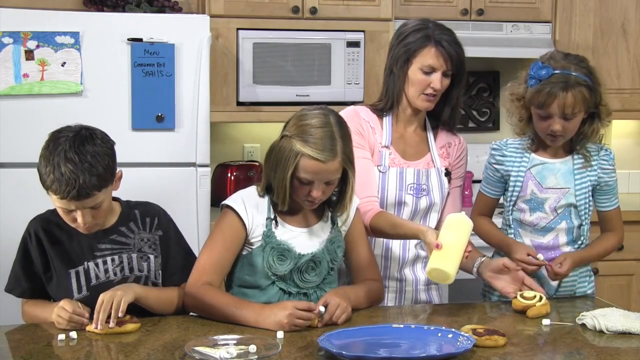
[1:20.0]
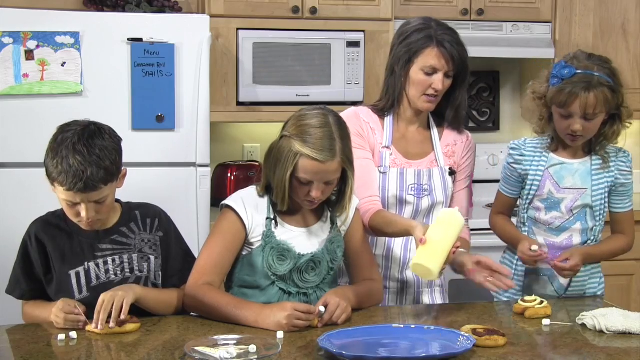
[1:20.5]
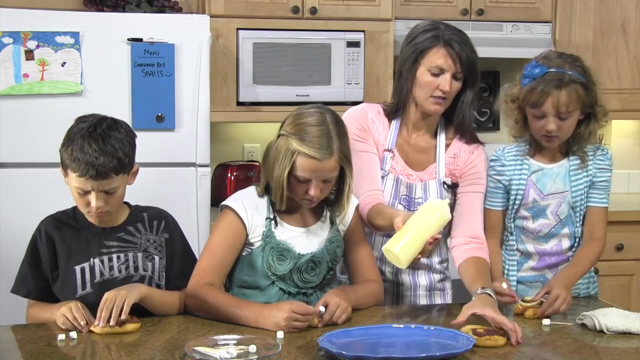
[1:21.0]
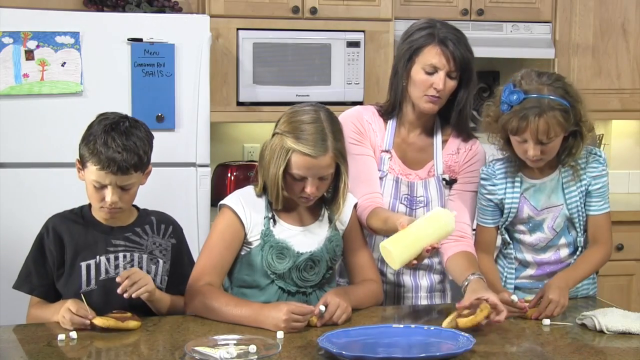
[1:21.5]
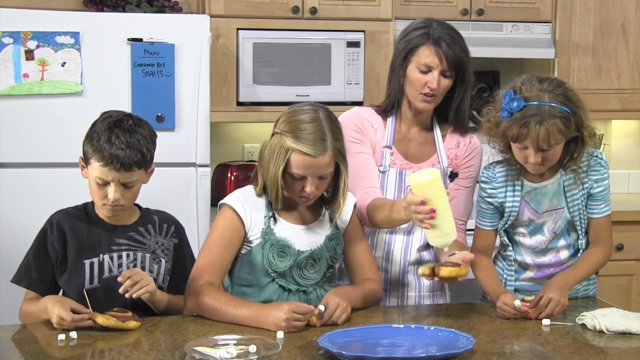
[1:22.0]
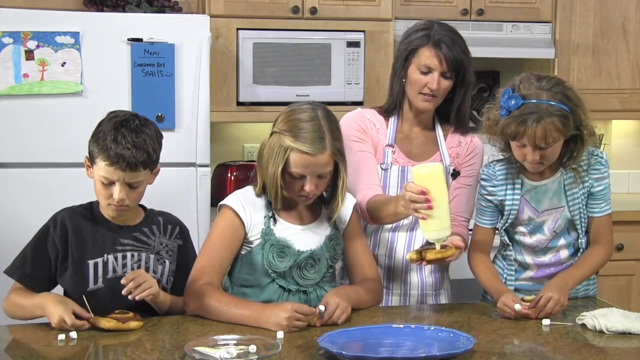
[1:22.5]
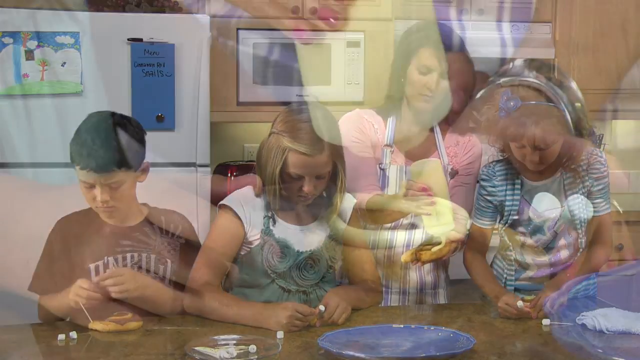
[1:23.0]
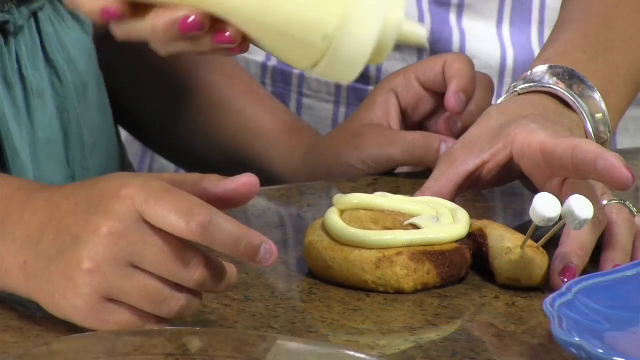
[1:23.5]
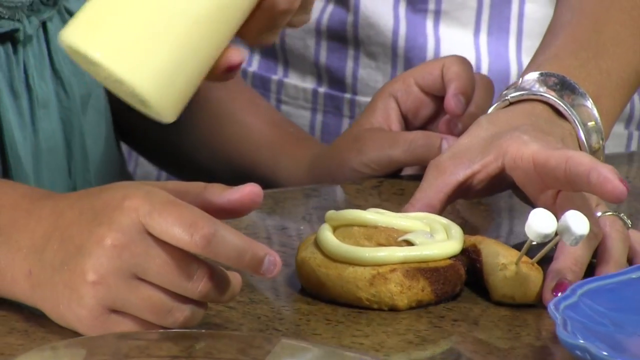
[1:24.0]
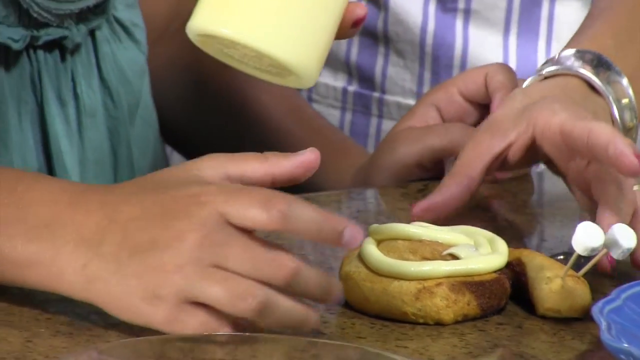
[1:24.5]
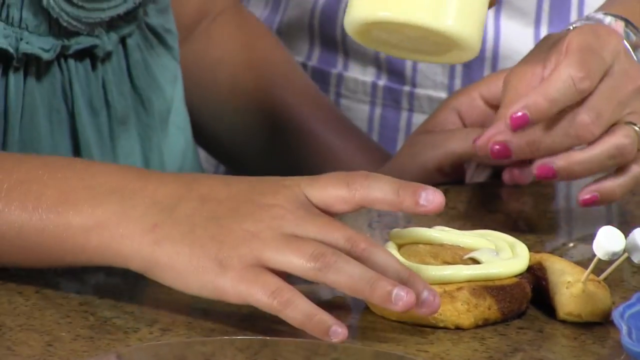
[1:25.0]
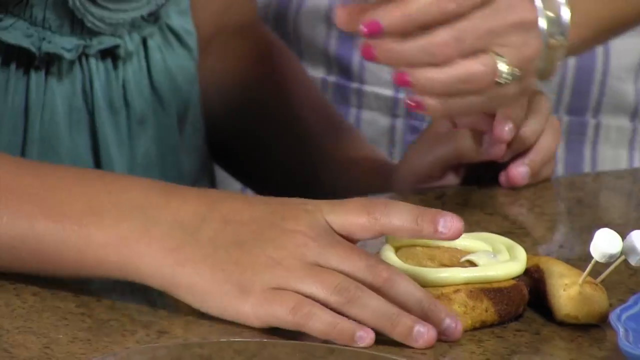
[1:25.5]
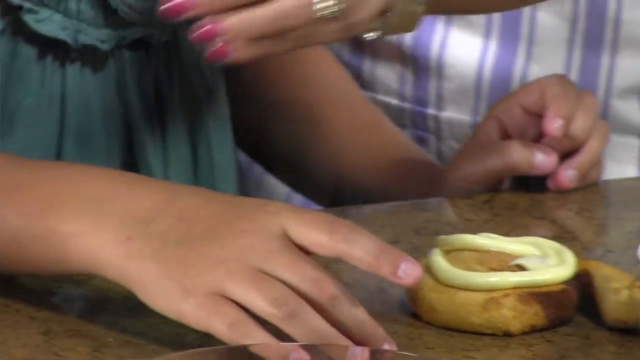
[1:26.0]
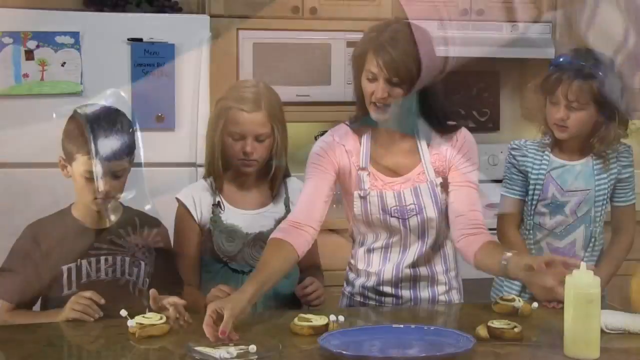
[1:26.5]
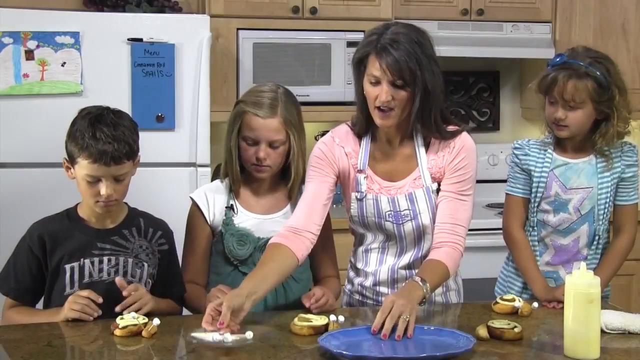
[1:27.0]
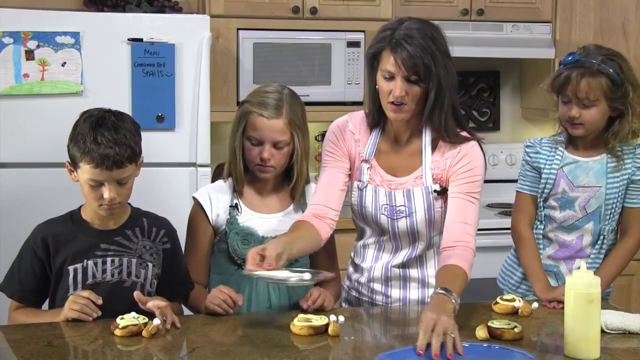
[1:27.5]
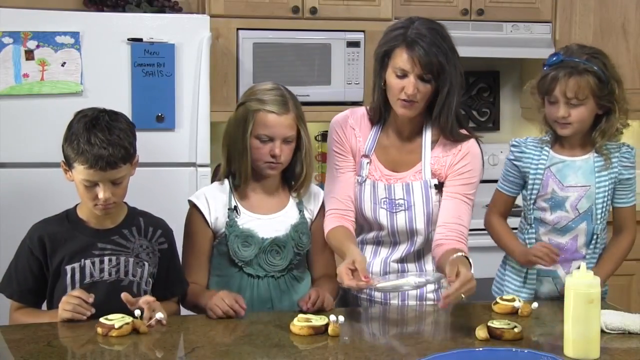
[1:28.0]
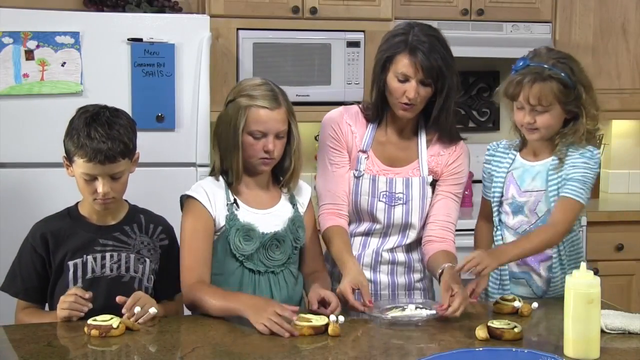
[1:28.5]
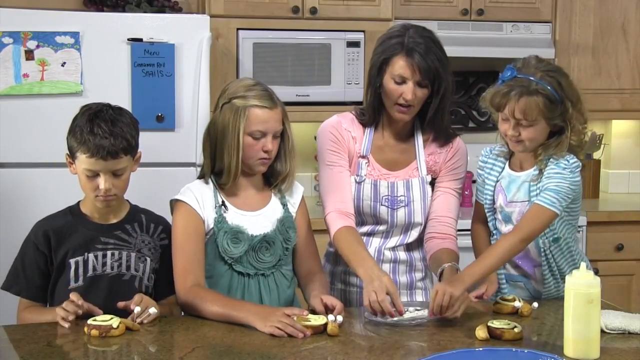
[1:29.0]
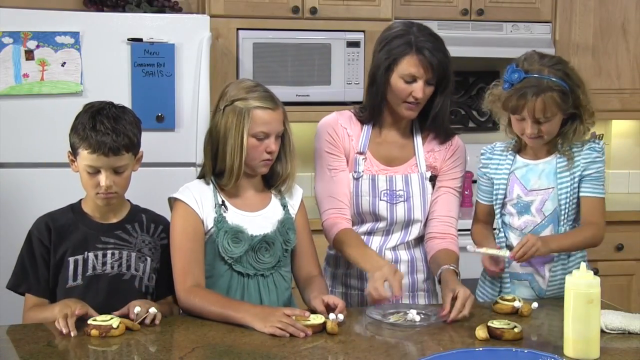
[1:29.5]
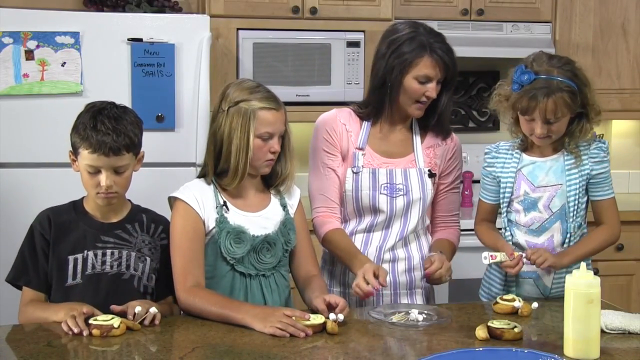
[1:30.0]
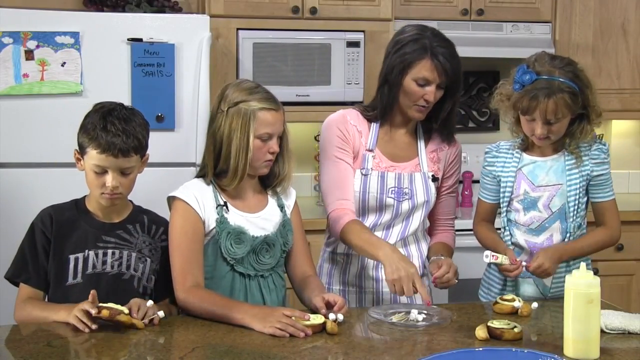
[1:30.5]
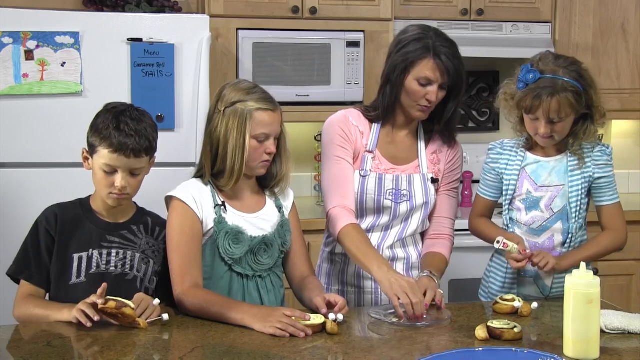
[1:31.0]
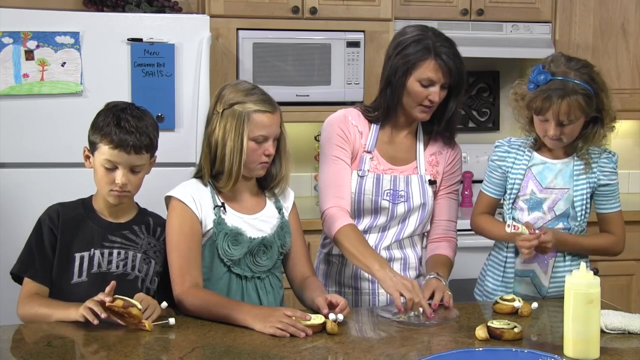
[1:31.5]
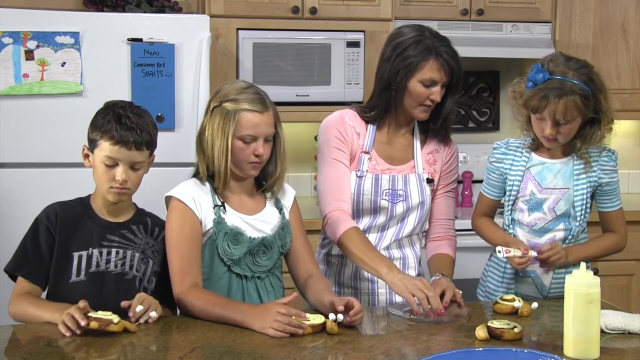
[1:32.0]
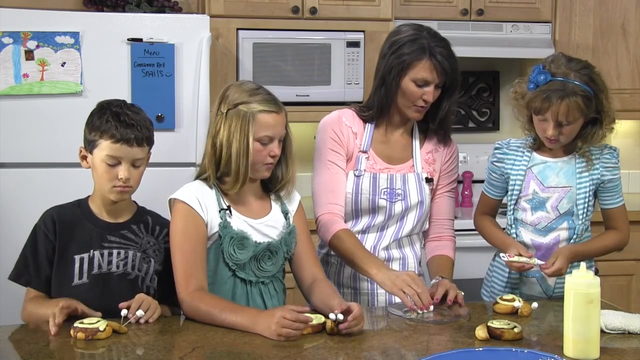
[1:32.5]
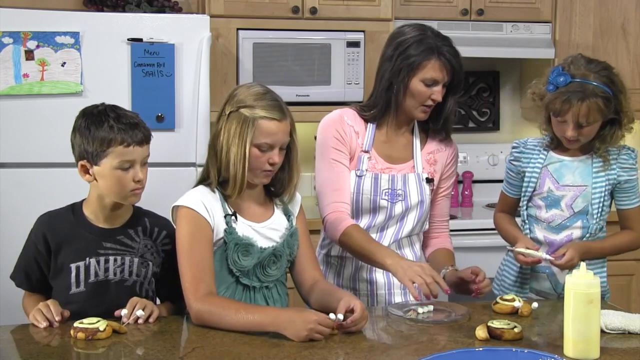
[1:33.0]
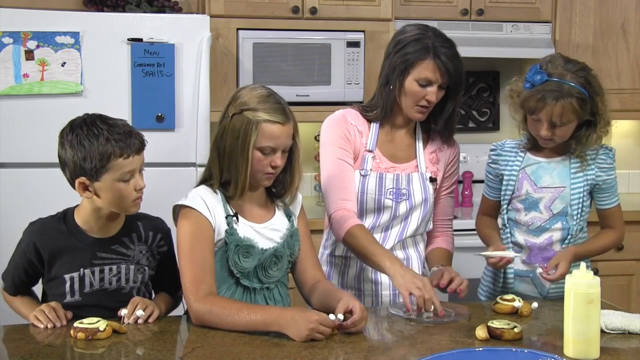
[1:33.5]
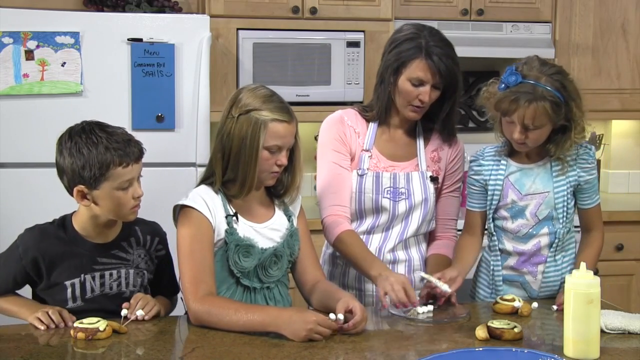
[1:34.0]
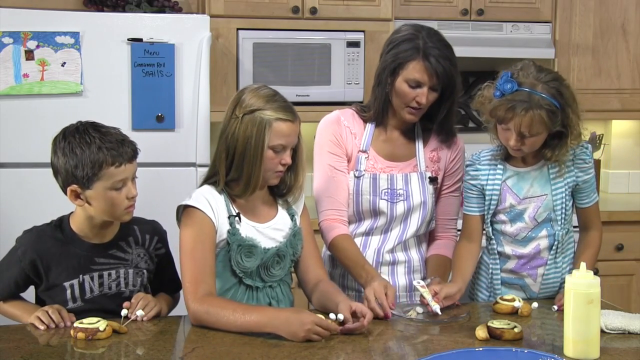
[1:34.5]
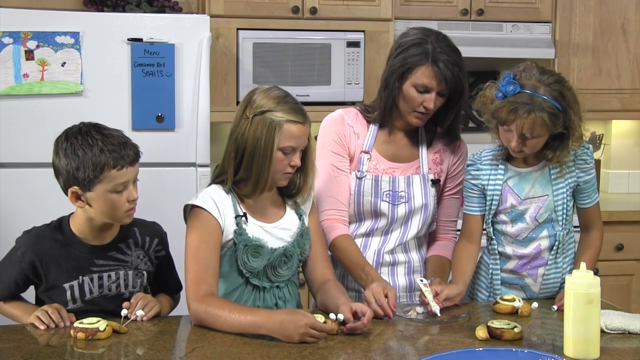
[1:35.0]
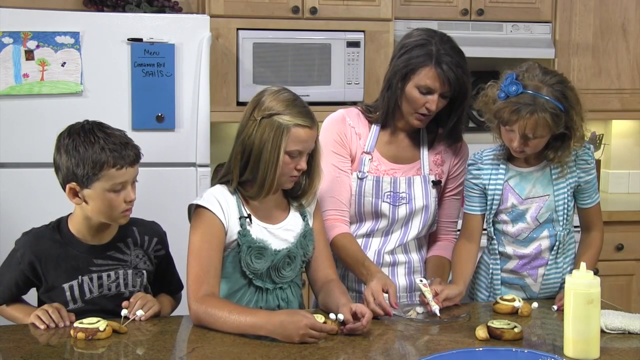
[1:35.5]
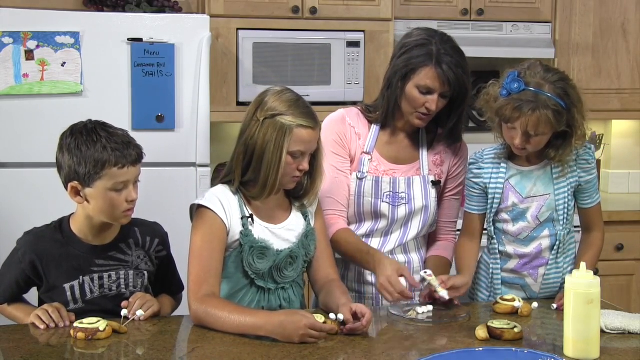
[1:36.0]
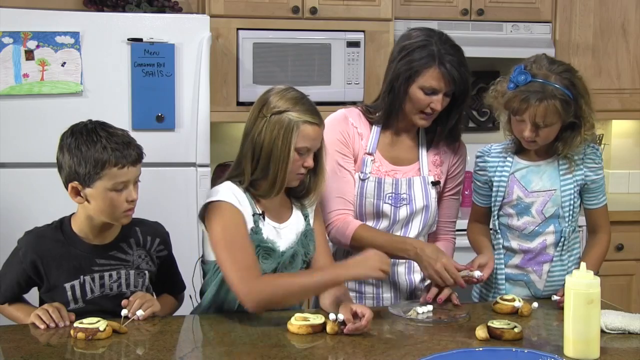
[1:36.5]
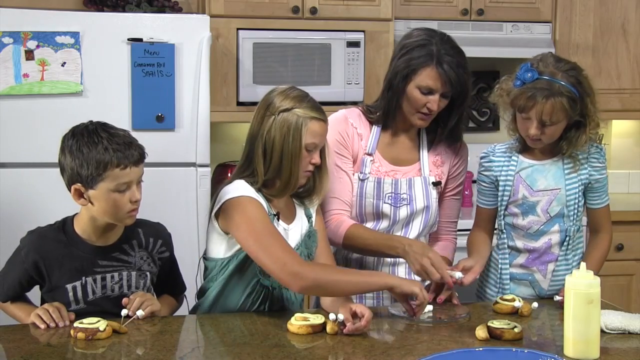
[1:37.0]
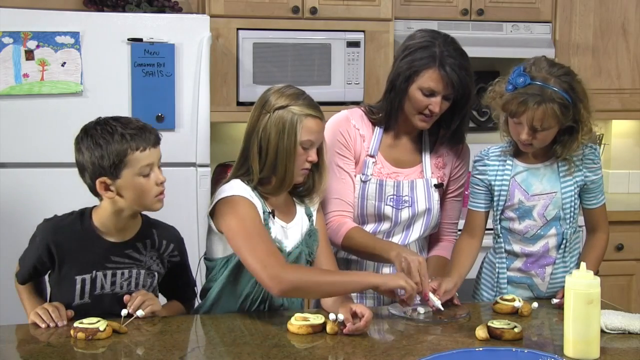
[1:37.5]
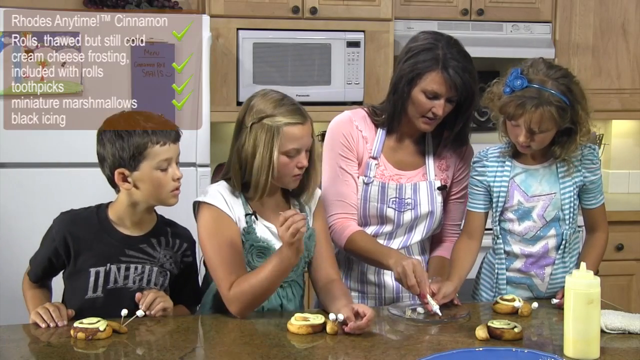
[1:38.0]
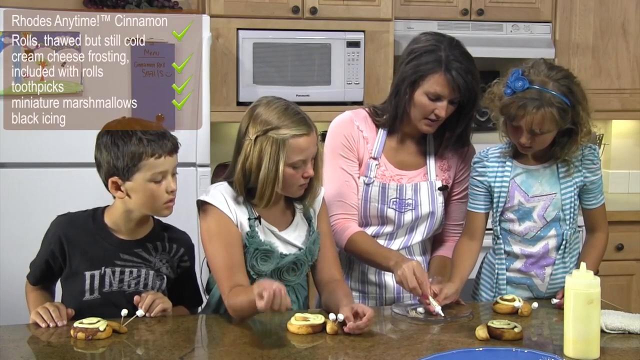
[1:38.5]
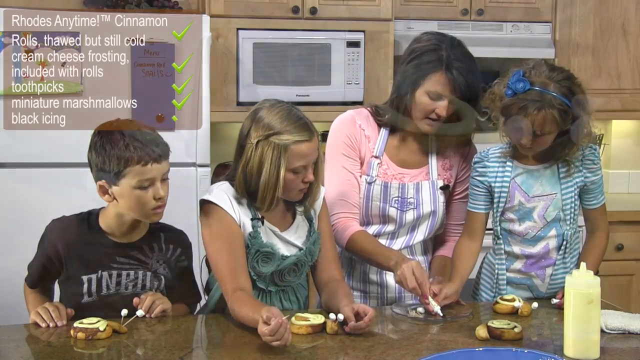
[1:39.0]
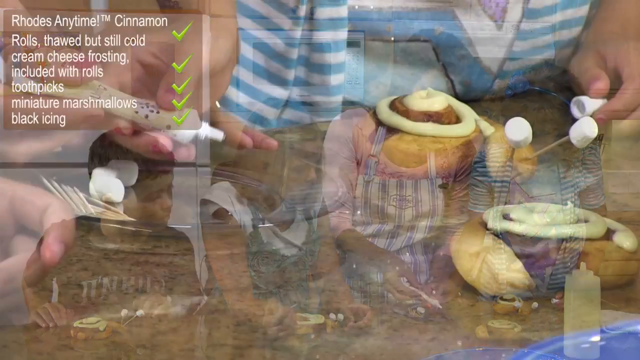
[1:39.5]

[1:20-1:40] The mother helps her daughters and the other children place the sauce neatly, and all three children place sauce on the rolls in front of them. They then have what appears to be something in a tube and place it on the glass plate they are using to guide themselves. The cinnamon rolls are now shaped into snails, with two eyes placed using toothpicks. A caption in the top left corner lists items with a tick next to each: "cream cheese frosting", "included with rolls", "toothpicks", "miniature marshmallows" and "black frosting".